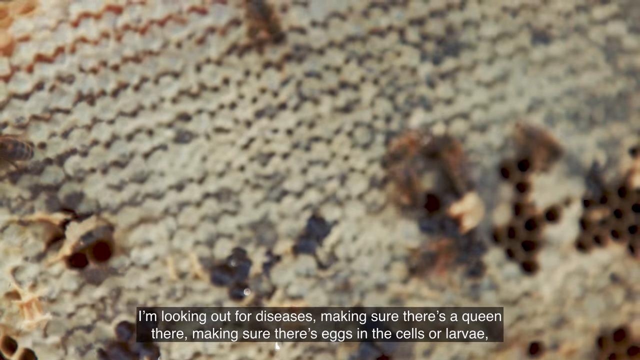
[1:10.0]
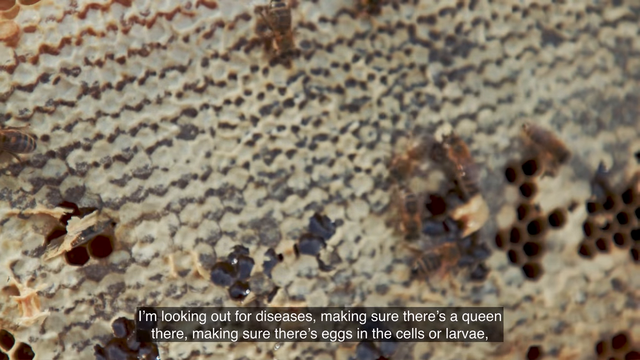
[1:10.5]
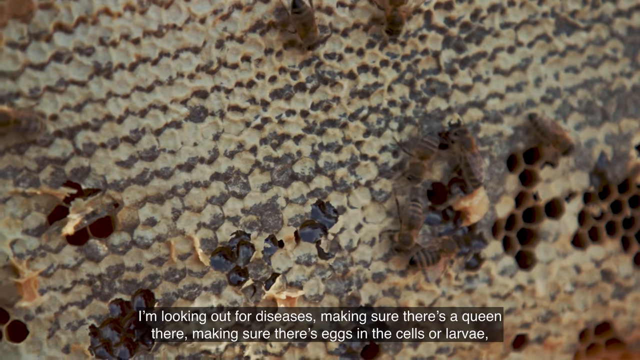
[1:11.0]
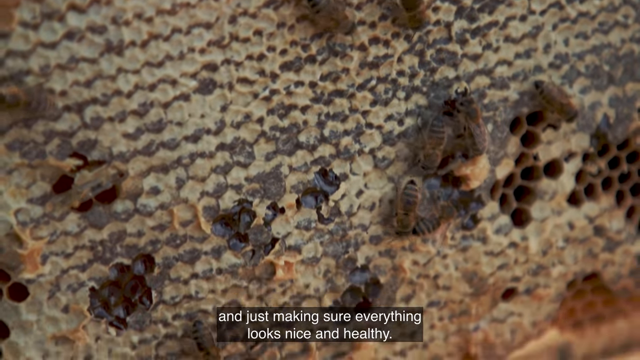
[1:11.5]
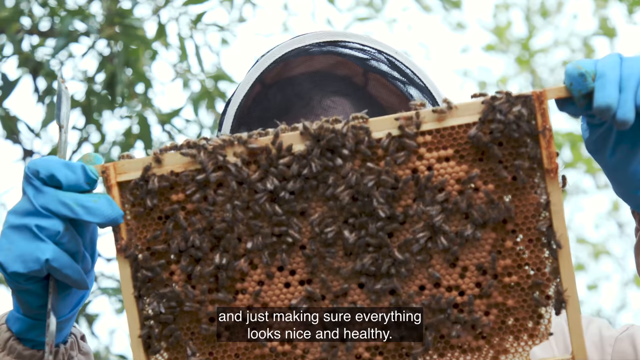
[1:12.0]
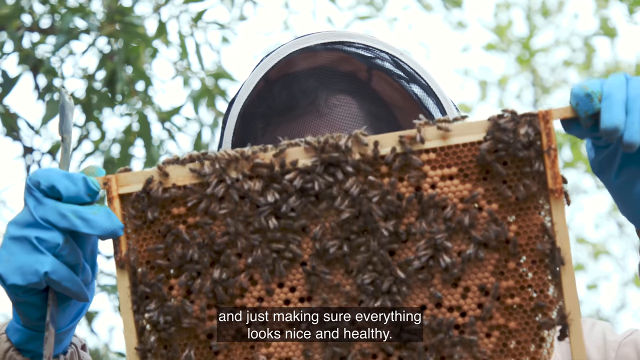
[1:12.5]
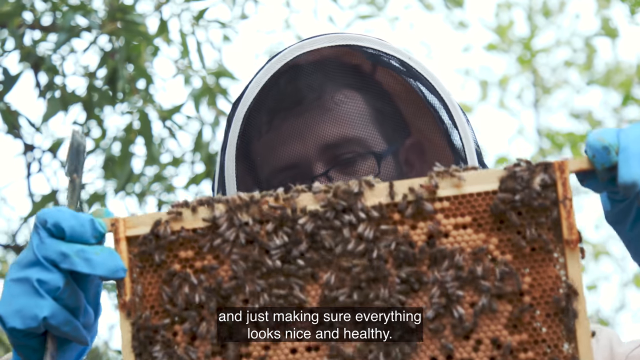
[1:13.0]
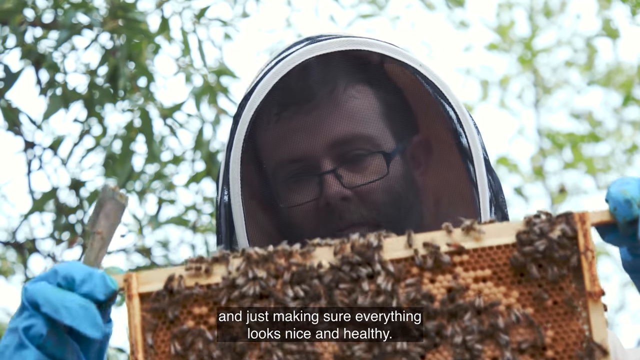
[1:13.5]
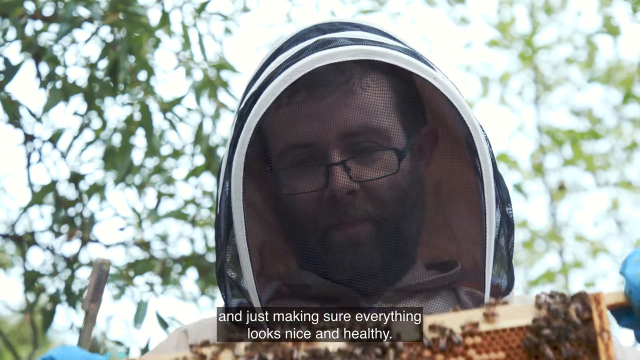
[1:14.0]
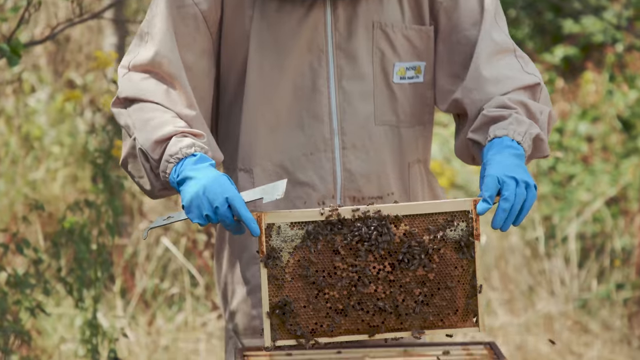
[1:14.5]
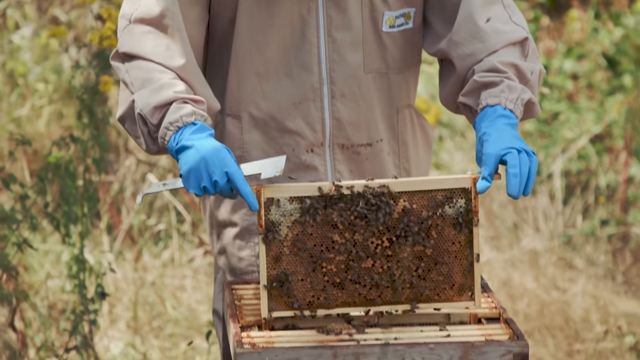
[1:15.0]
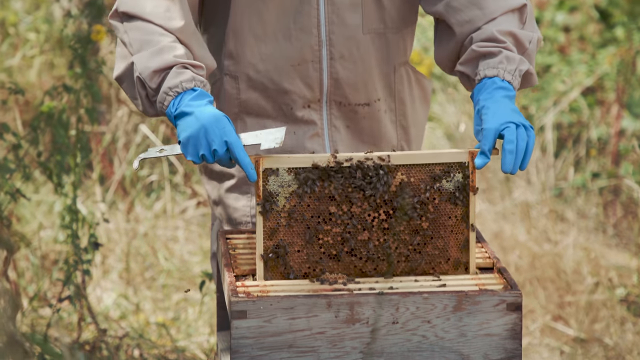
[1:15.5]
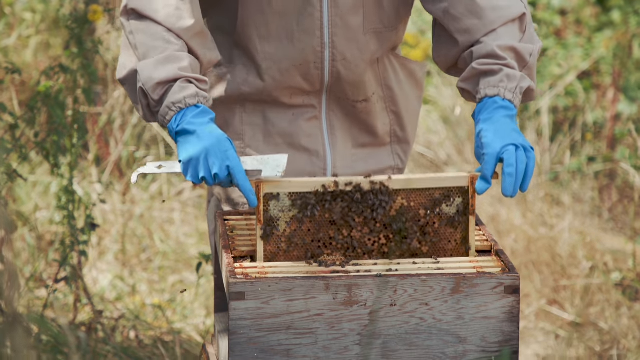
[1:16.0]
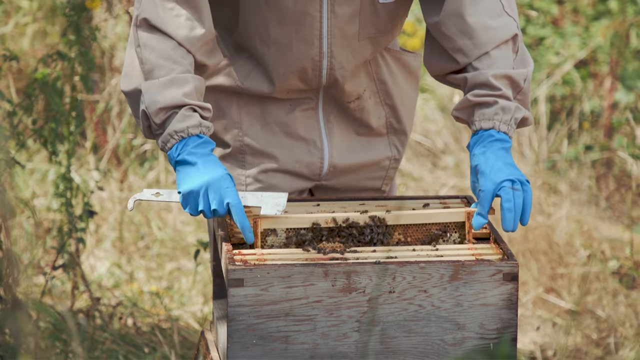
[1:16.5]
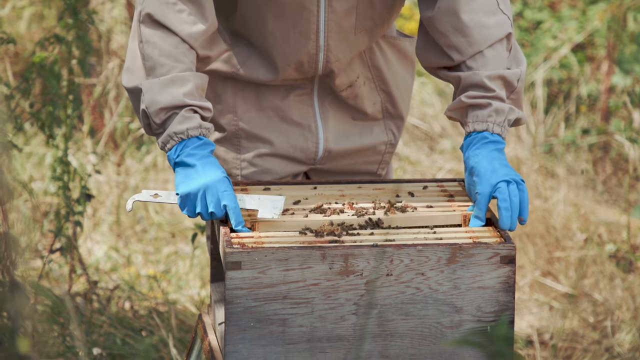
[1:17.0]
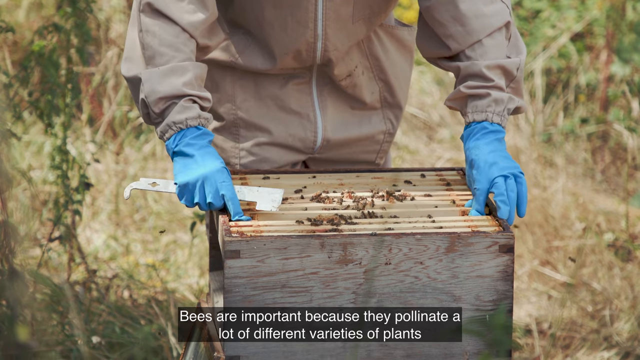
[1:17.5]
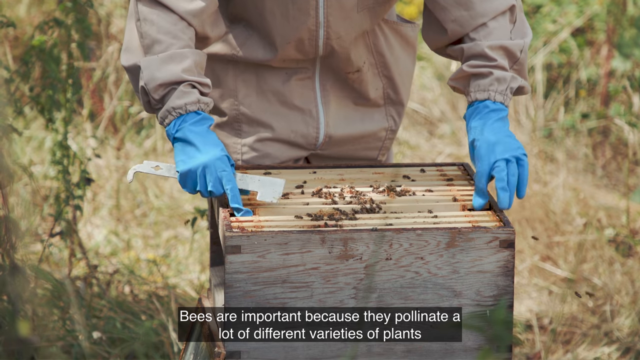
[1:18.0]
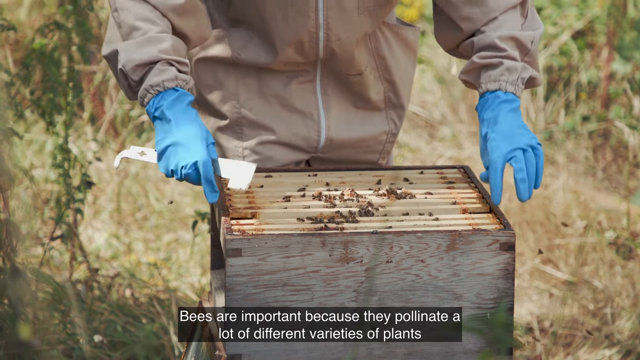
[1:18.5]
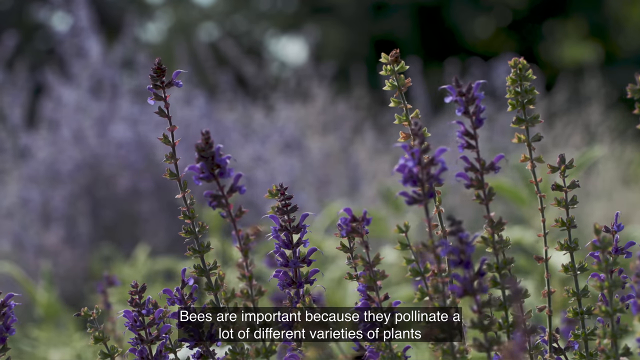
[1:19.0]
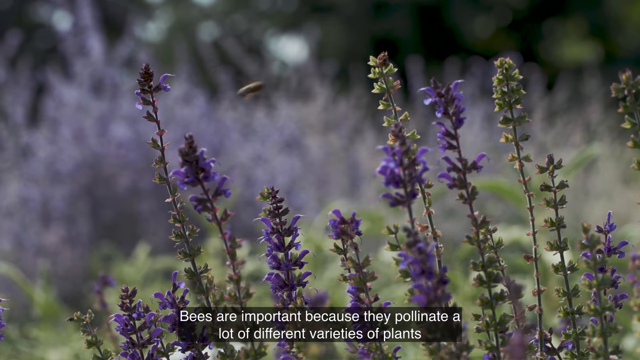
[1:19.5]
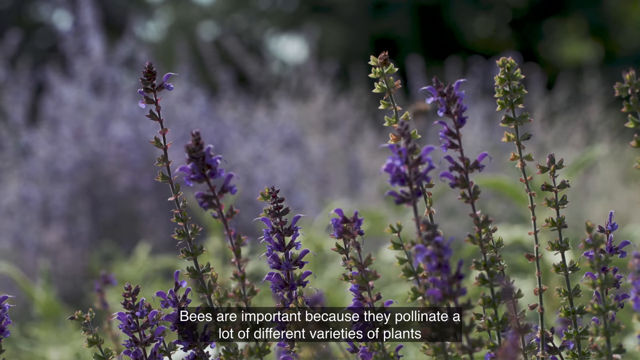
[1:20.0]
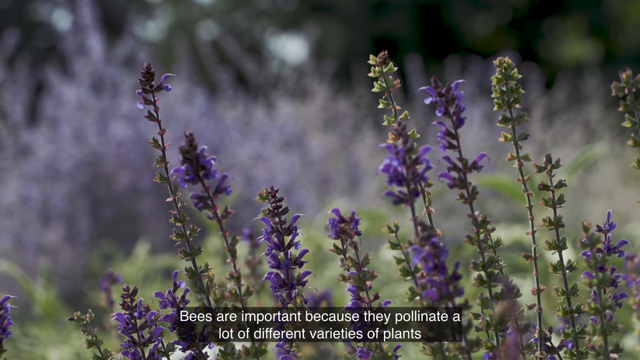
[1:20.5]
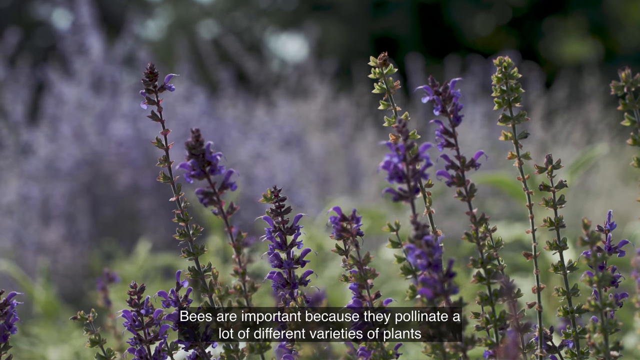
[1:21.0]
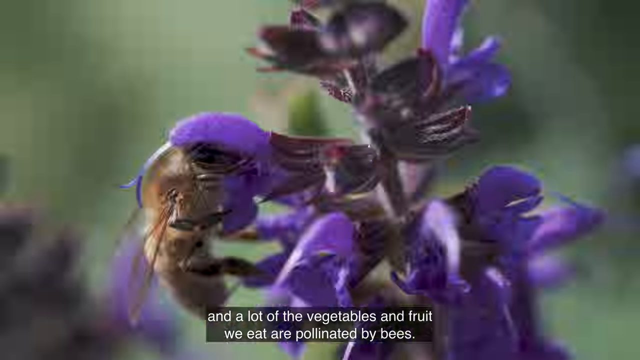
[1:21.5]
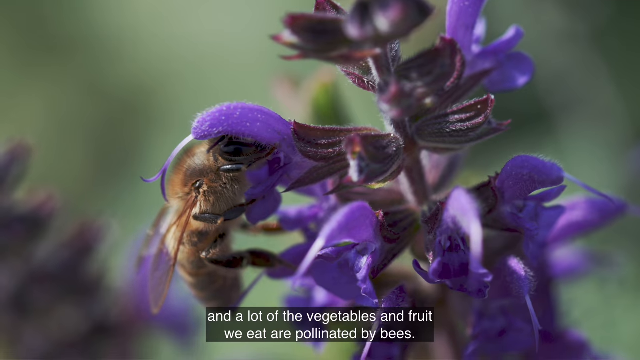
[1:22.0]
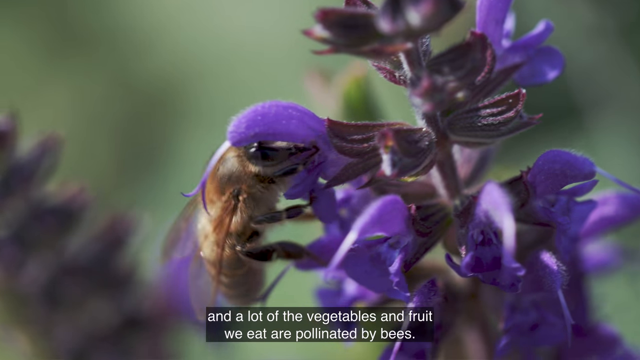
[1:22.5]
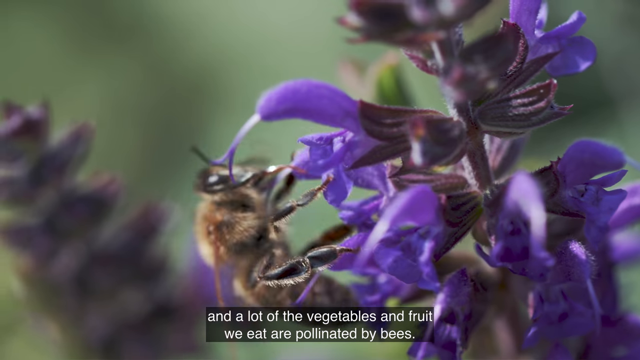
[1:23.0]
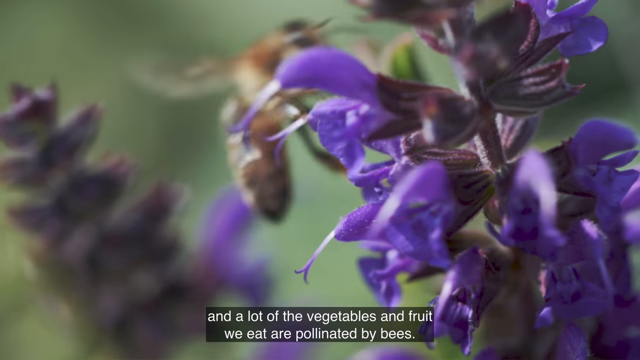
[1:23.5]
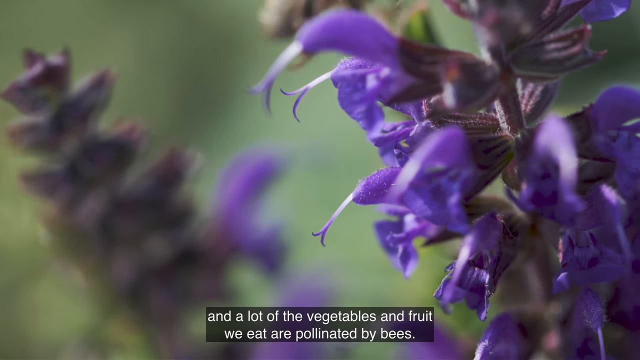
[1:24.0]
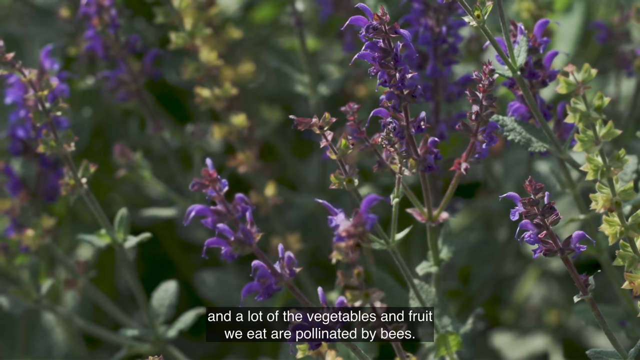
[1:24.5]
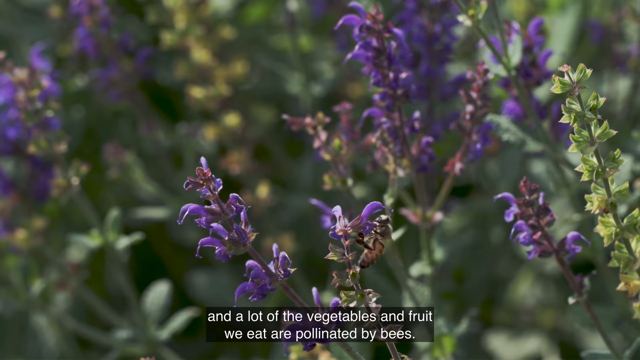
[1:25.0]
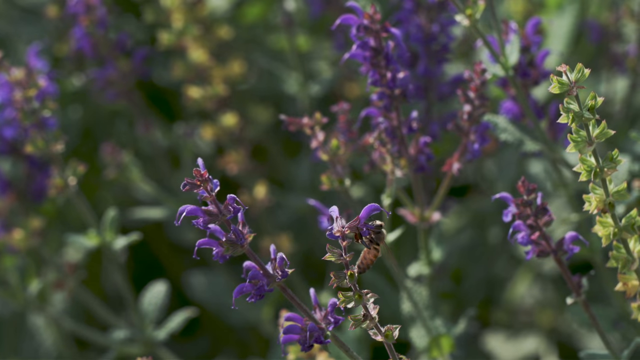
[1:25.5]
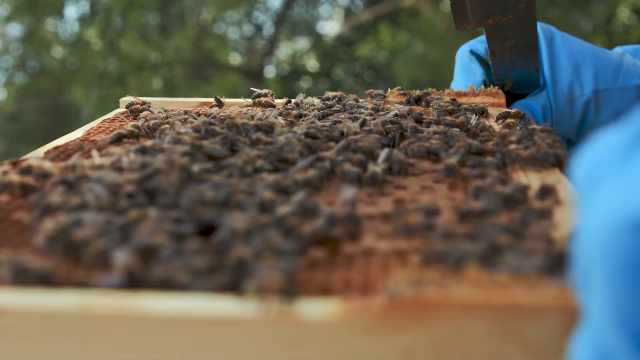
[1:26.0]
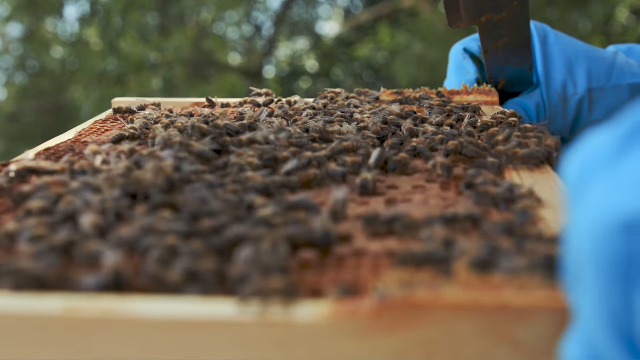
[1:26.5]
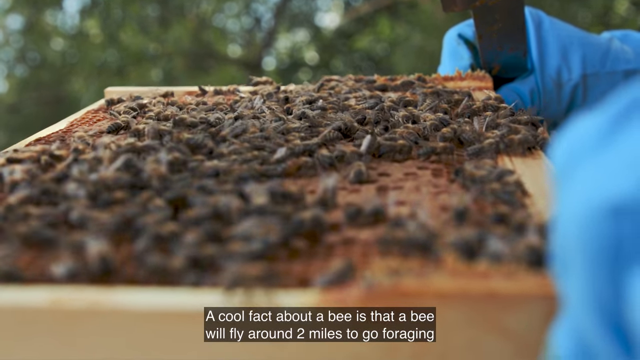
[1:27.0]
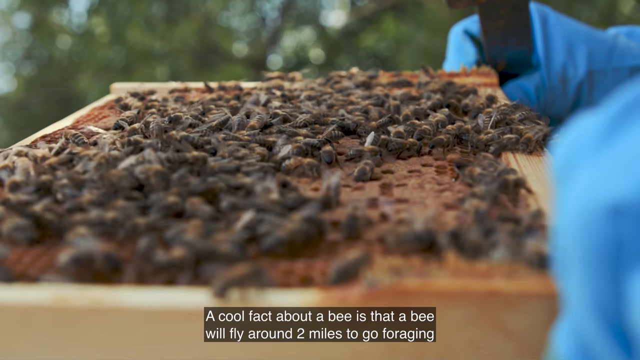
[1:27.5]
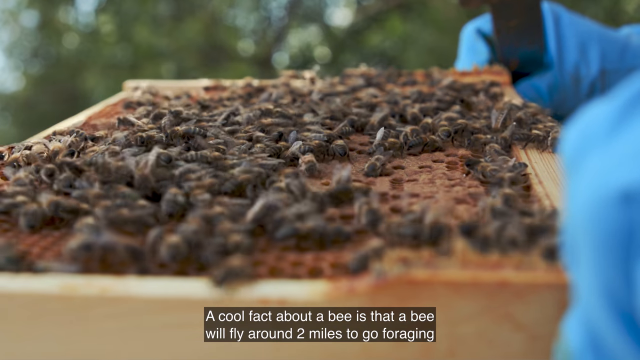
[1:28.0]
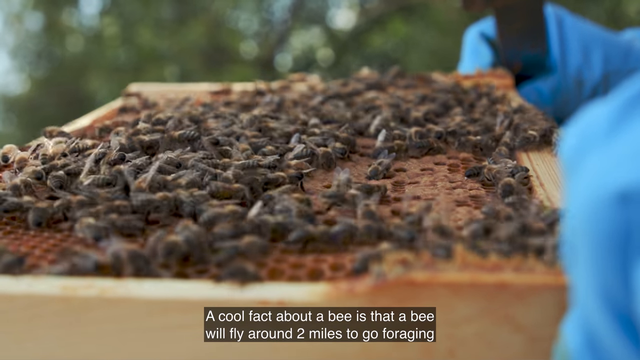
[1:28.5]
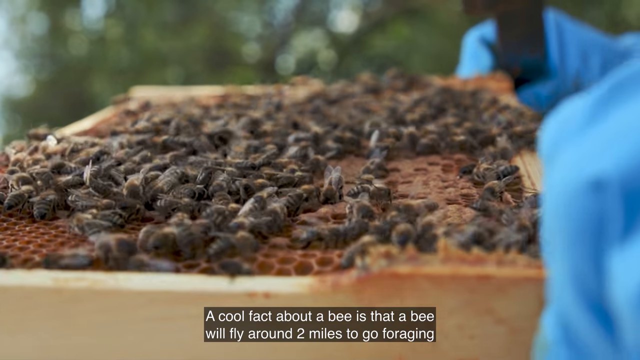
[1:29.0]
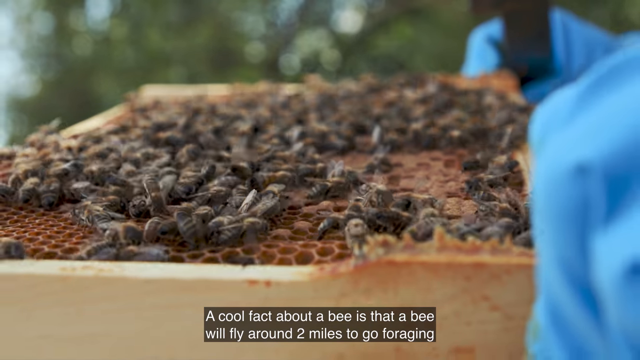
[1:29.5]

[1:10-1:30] Jones seems to pull out a frame to inspect how much honeycomb it has, then puts it back into the hive; the frame is full of a large number of bees. Afterwards, flowers are shown: lavender, a small purple flower, with bees on them. Jones is holding a frame covered with a great many bees.